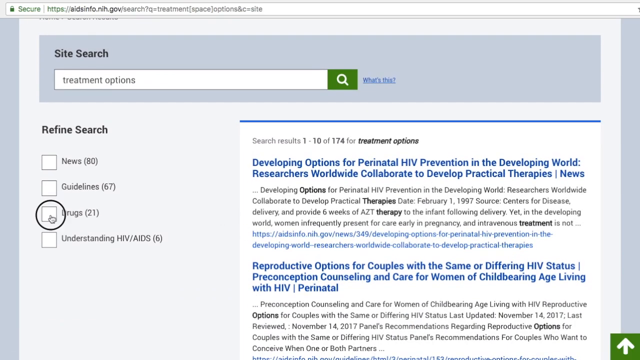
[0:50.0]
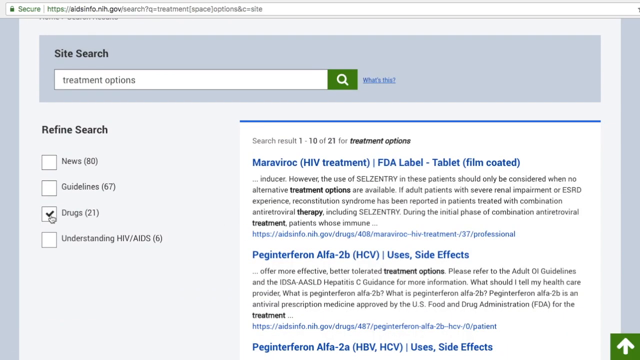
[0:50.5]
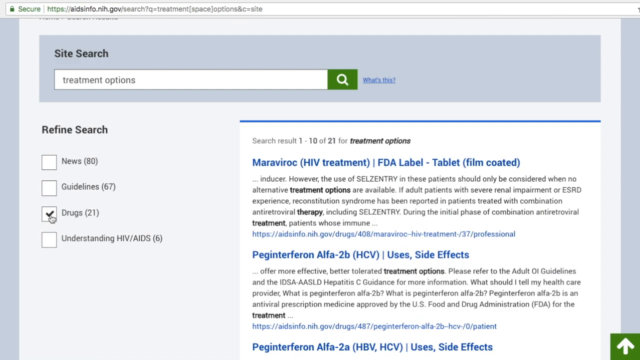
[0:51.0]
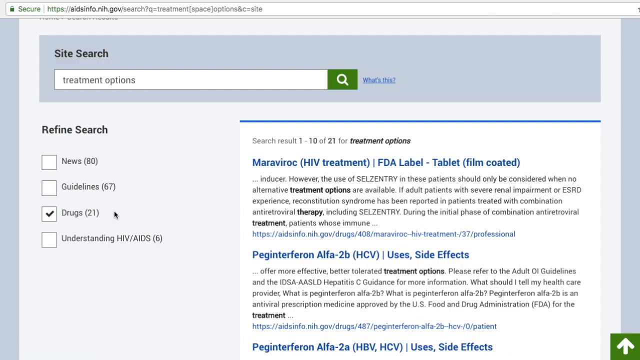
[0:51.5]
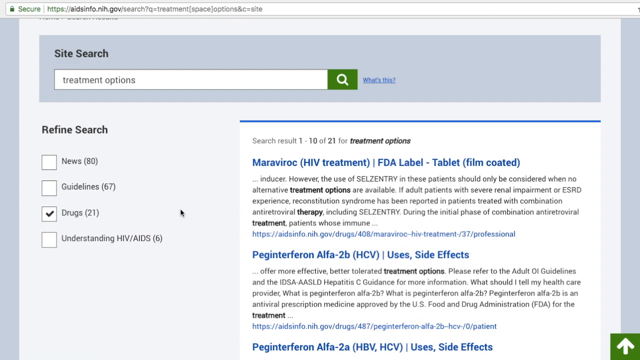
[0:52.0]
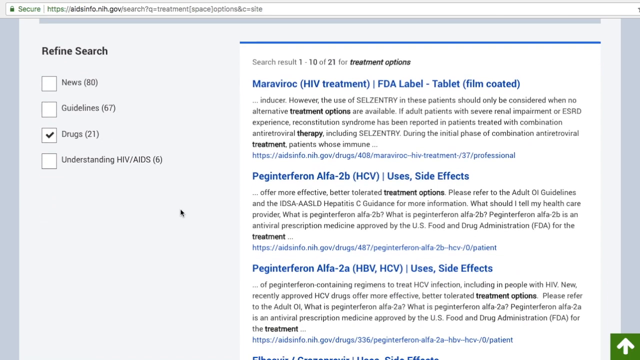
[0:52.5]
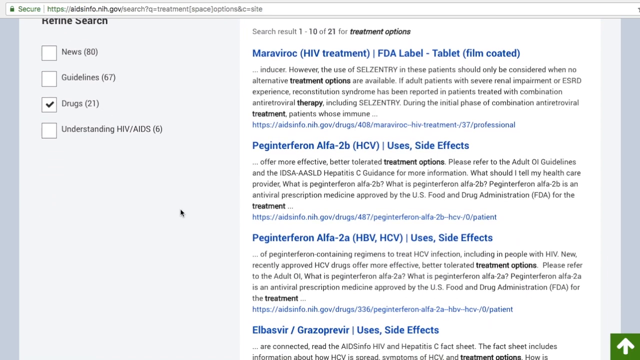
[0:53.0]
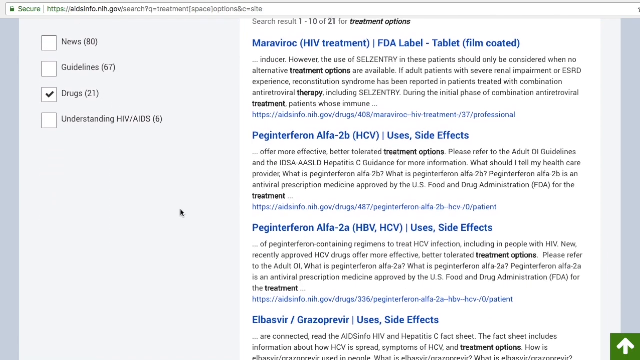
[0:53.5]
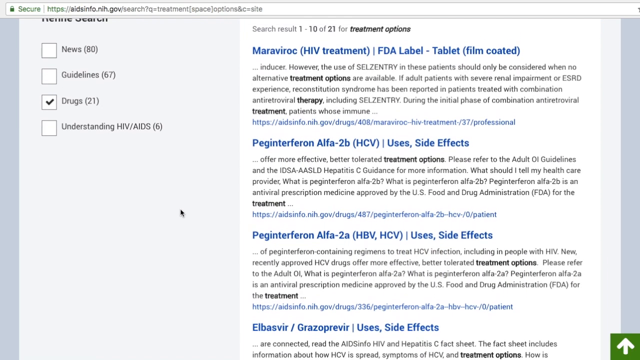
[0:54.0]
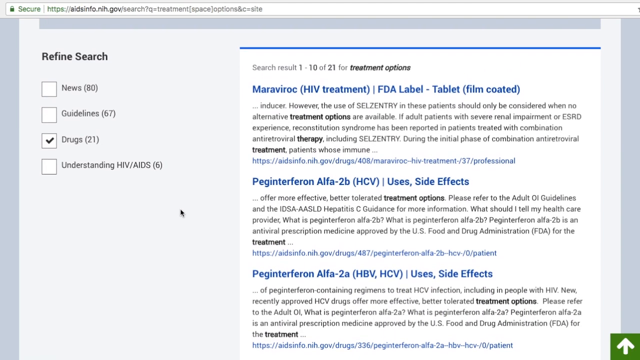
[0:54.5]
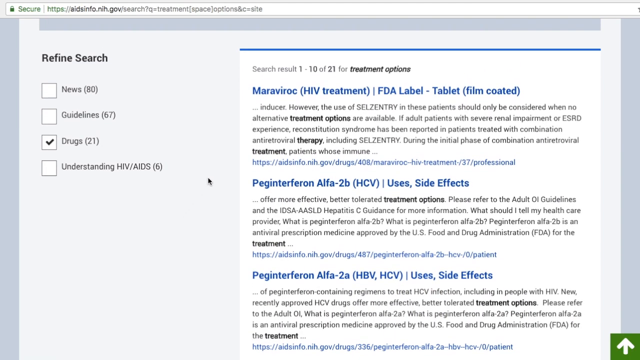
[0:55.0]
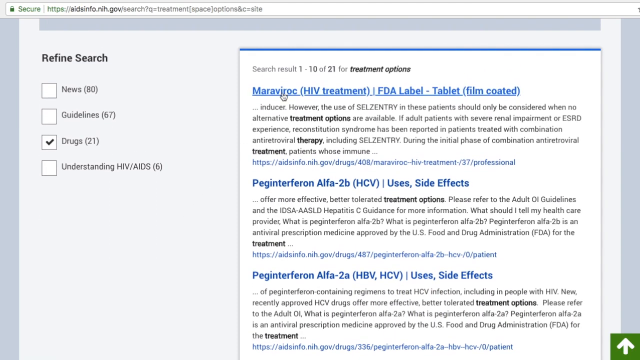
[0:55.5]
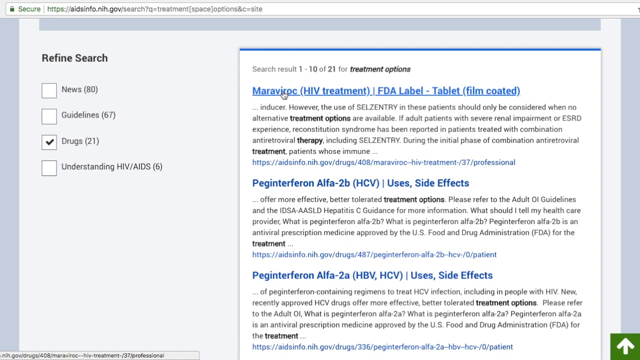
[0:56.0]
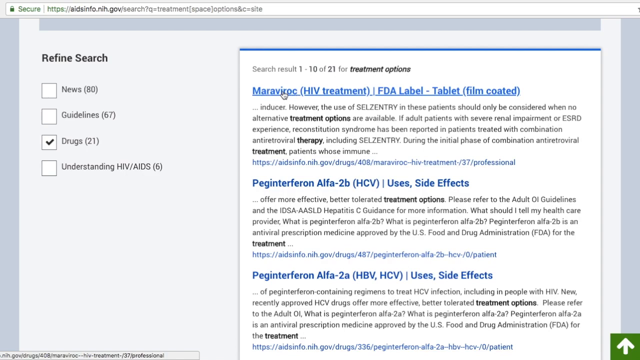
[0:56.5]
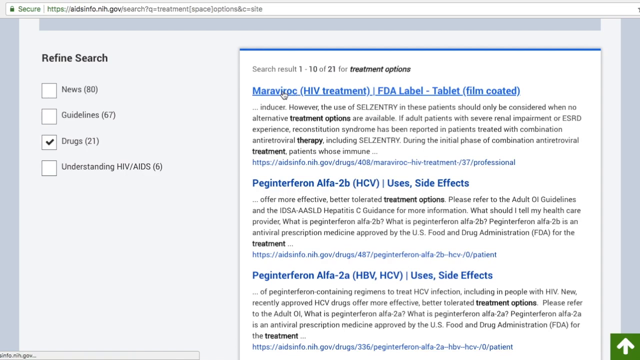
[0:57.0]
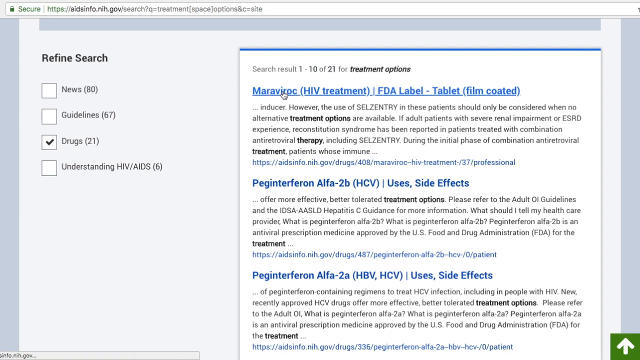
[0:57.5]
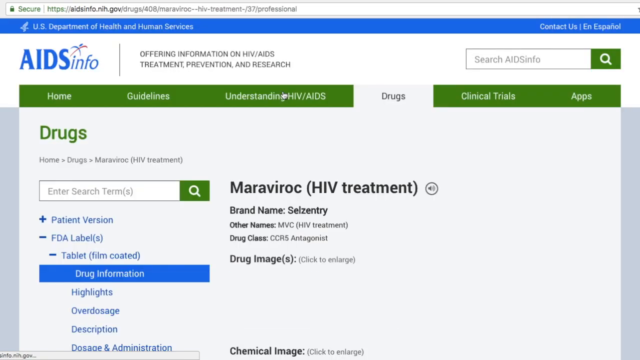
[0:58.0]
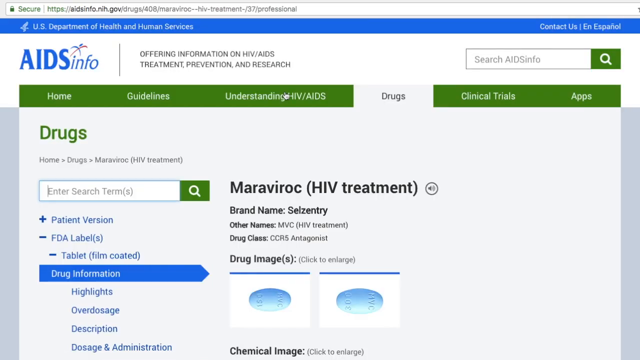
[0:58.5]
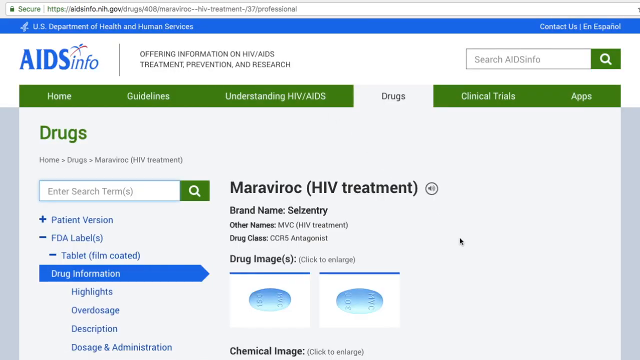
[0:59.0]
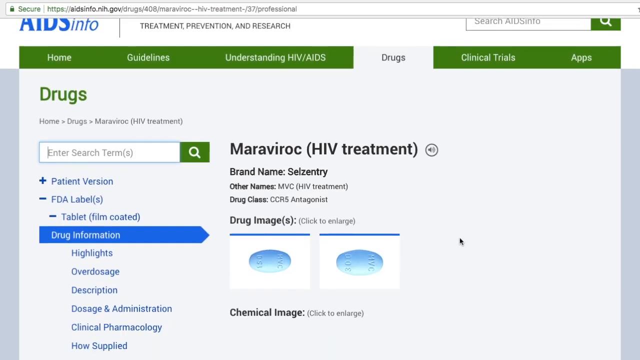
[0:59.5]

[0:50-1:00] The results page for the site search "treatment options" appears, with a gray background at the top. On the left-hand side it says "Refine Search," and beneath that are four tabs: "News" (80), "Guidelines (67)," "Drugs (21)," and "Understanding HIV AIDS (6)." The cursor has clicked on the square for drugs. Next to that are two results. At the top it says "Search Results 1 through 10 of 174 for treatment options." The top headline reads "Developing Options for Perinatal HIV Prevention in the Developing World," followed by "Researchers worldwide collaborate to develop practical things." As the cursor clicks the drugs tab, the page shows "Search Result 1 of 10 of 21 for treatment options," with the top option "Maraviroc HIV Treatment, FDA Label, Tablet, Film Coated." The page scrolls briefly, and then the cursor clicks on the top link.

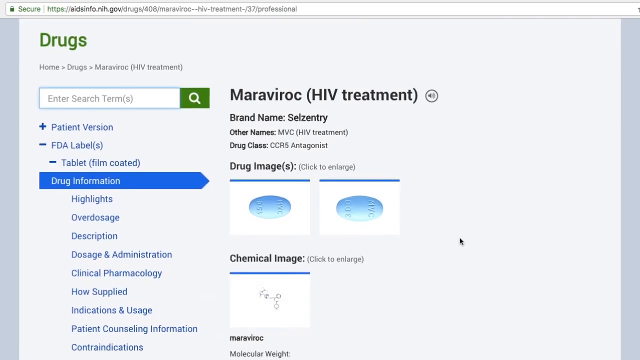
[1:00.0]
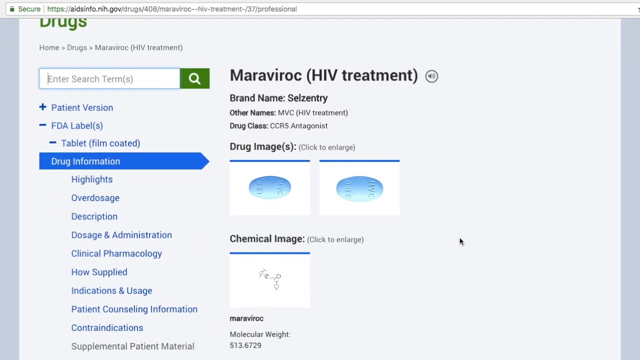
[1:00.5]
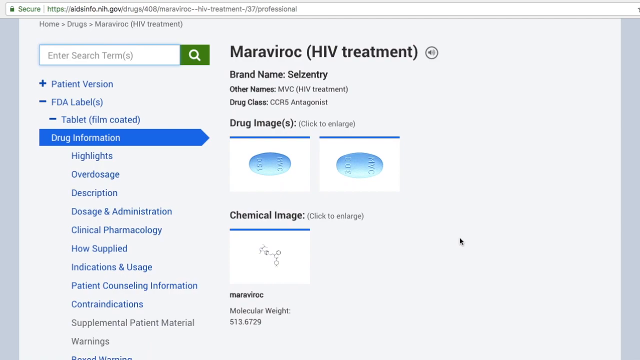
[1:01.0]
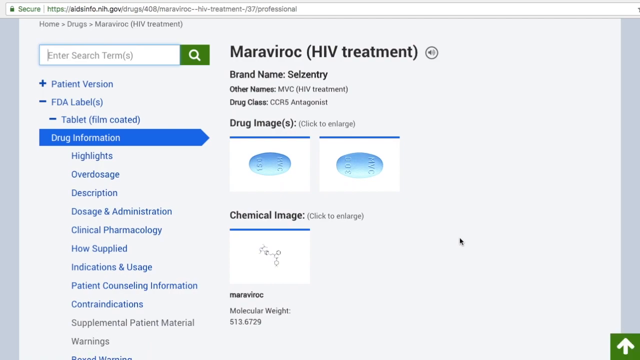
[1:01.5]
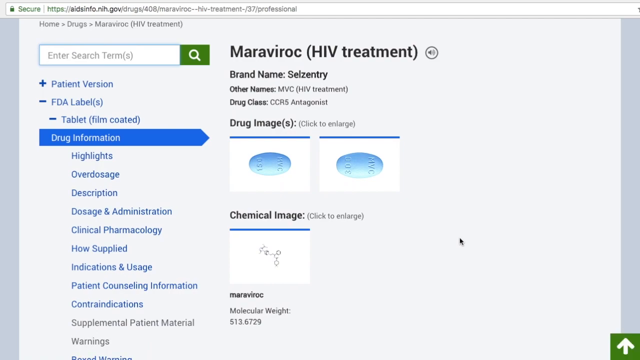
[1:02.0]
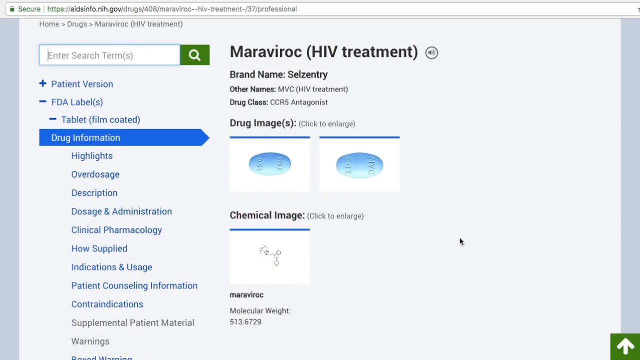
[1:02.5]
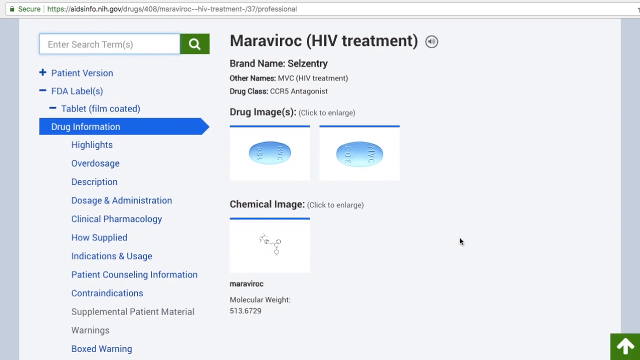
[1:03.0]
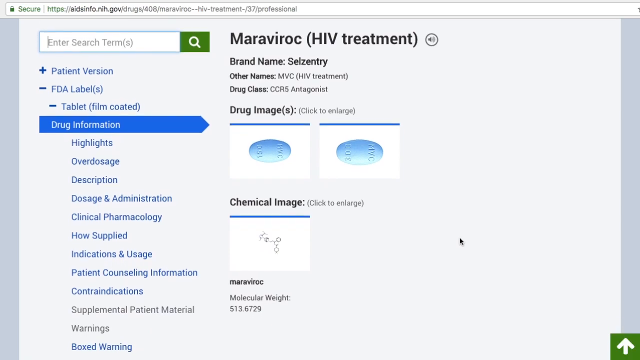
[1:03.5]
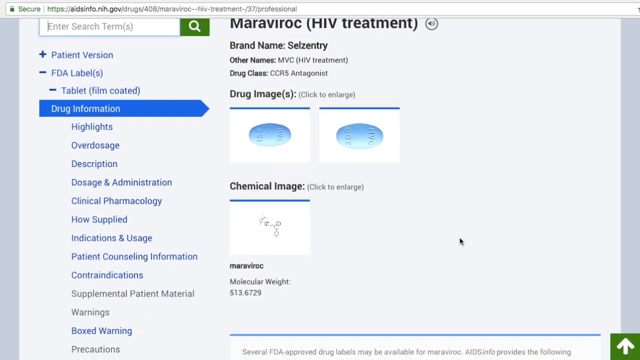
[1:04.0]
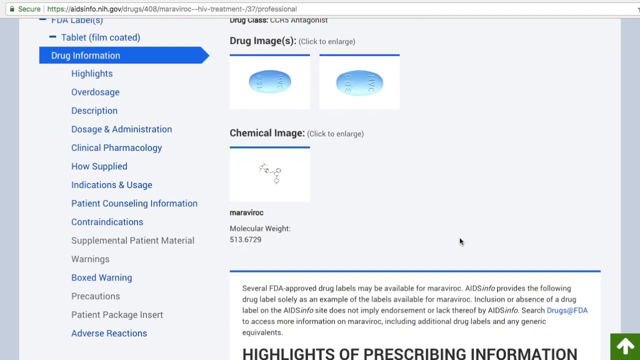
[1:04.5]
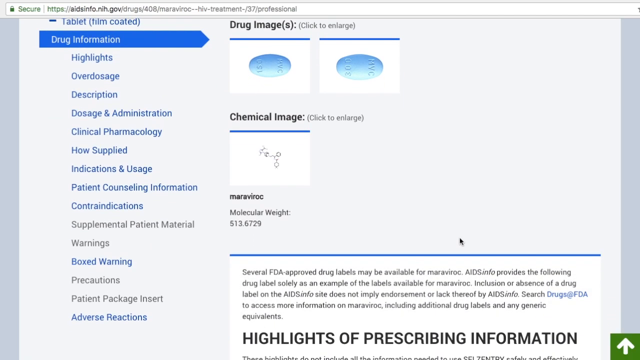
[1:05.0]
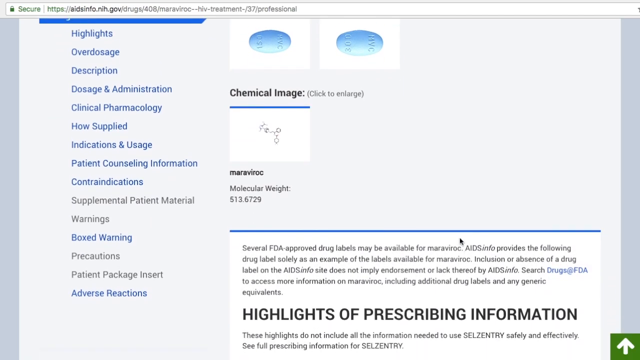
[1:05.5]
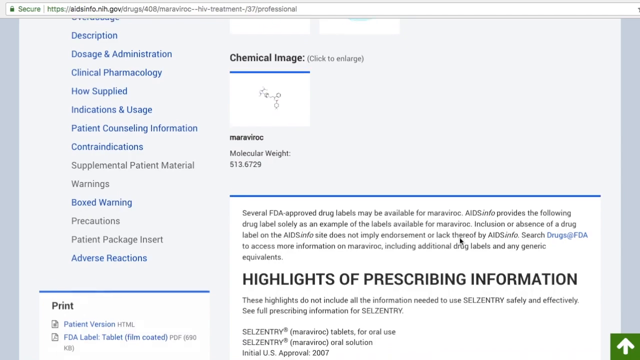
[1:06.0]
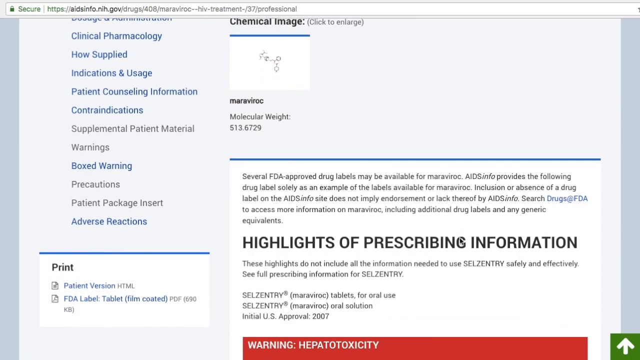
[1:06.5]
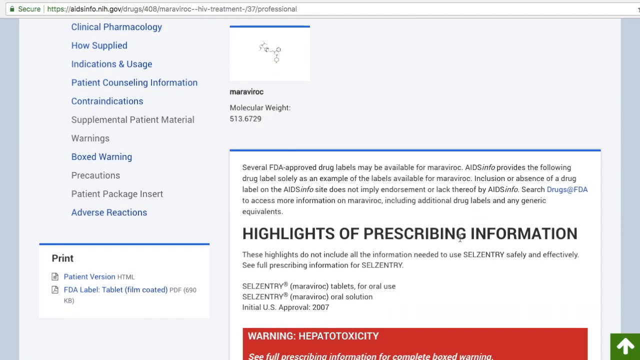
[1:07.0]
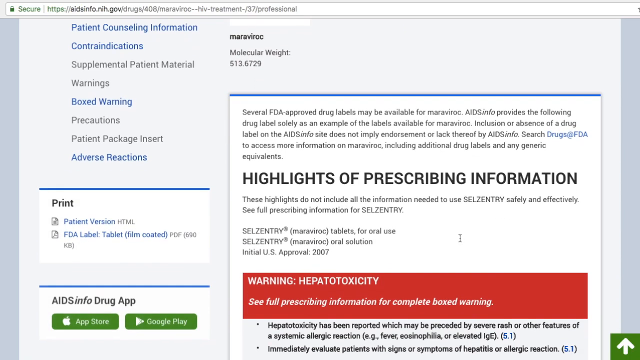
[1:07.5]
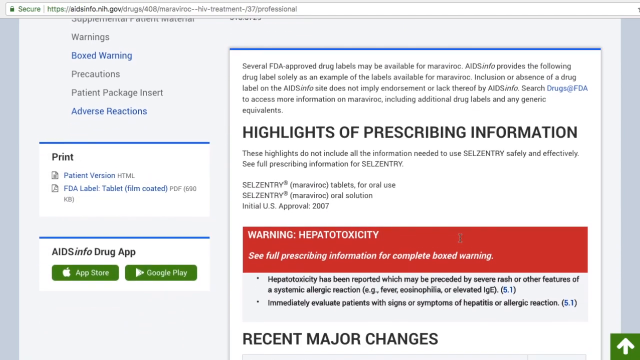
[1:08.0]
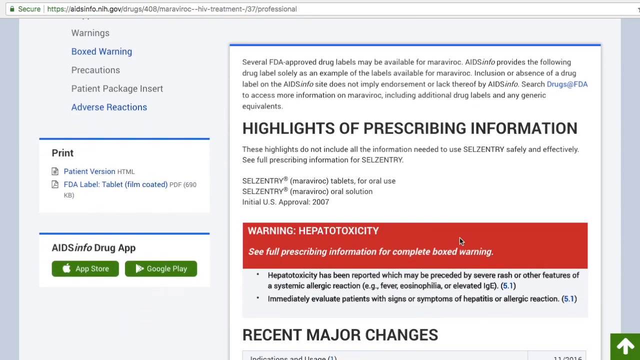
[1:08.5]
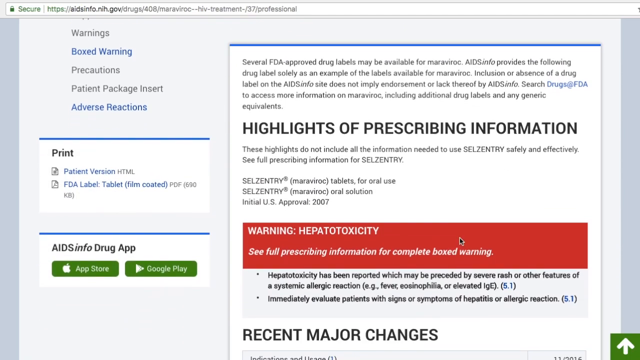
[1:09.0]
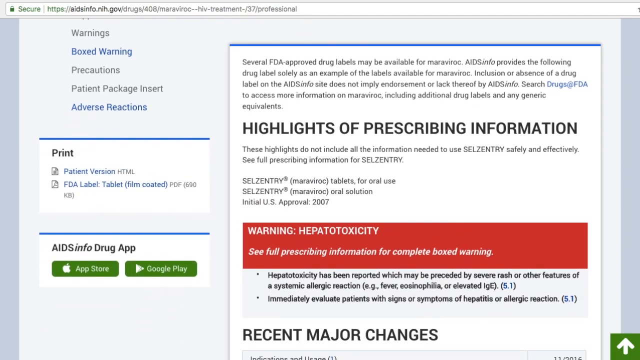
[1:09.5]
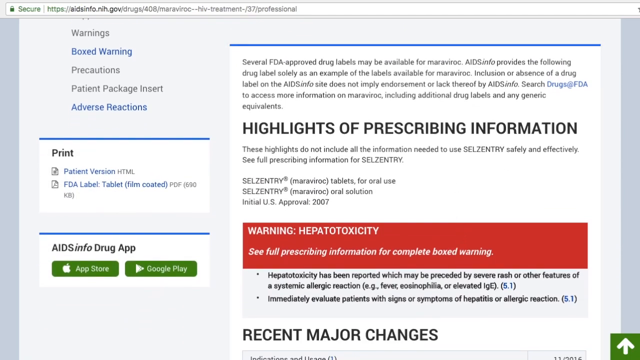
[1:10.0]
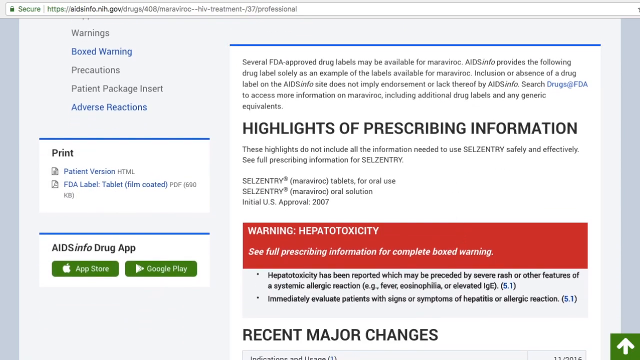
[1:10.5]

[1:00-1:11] A web page shows "drugs" in green on the upper left-hand side, and below that "home, drugs, Maraviroc, HIV treatment." There is a search bar, and to the right of it the page says "Maraviroc, HIV treatment," with brand name "Selzentry," other names "MVC, HIV treatment," and drug class "CCR5 antagonist." Below that, "drug image" appears in black with "Click to enlarge," and below that are two images side by side of an oval blue tablet with letters embossed on it. Below those it says "chemical image" and "click to enlarge." On the left-hand side of the screen under the search bar is a list of tabs in blue which, from top to bottom, read "patient version," "FDA label, tablet, film-coated," "drug information" (highlighted in blue), "highlights," "overdosage," "description," "dosage and administration," "clinical pharmacology," "how supplied," "indications and usage," "patient counseling information," and "contraindications." The page scrolls down further and then back to the top.